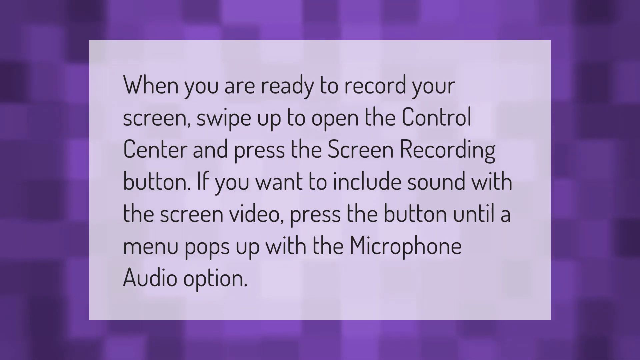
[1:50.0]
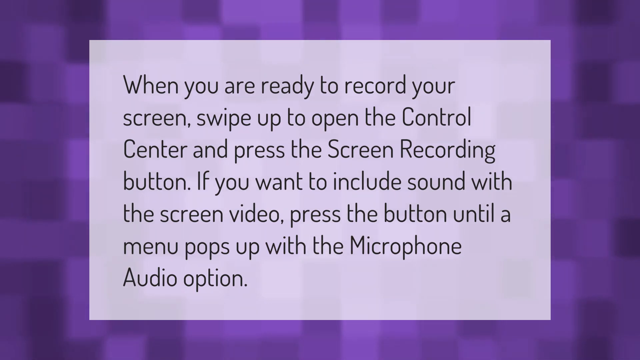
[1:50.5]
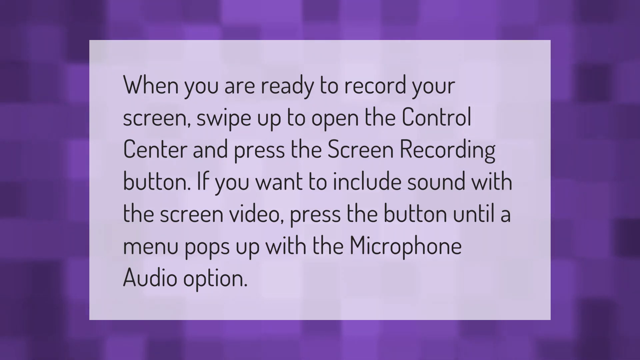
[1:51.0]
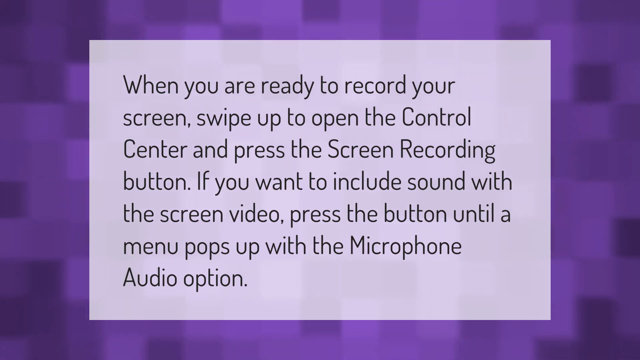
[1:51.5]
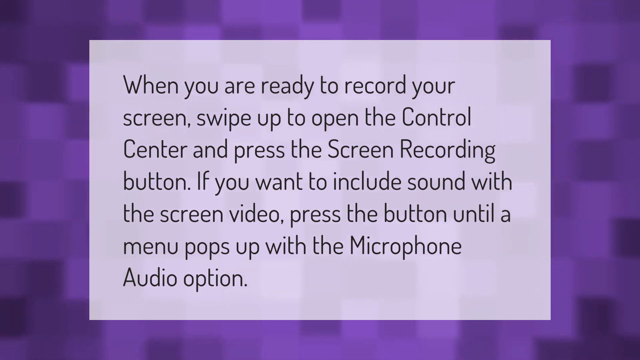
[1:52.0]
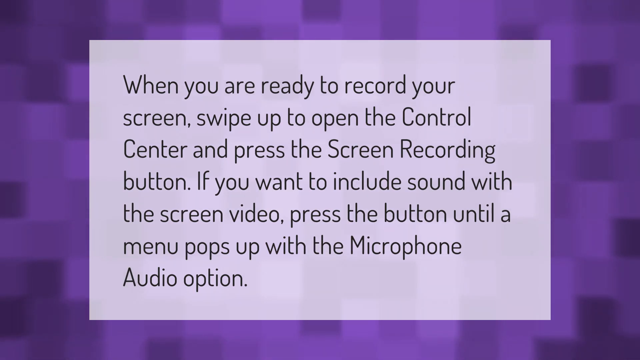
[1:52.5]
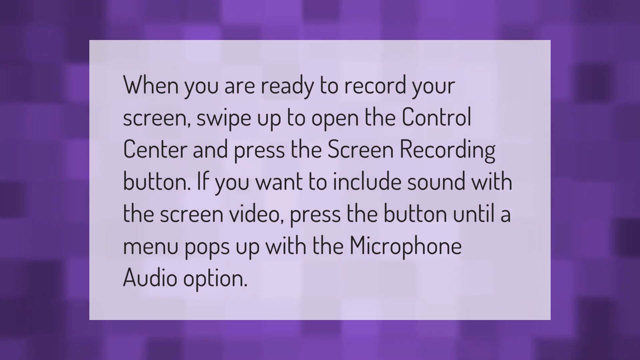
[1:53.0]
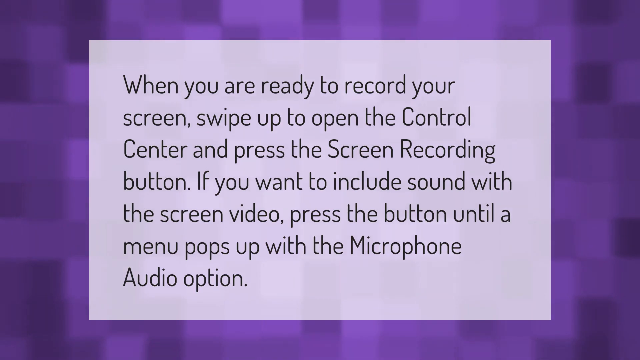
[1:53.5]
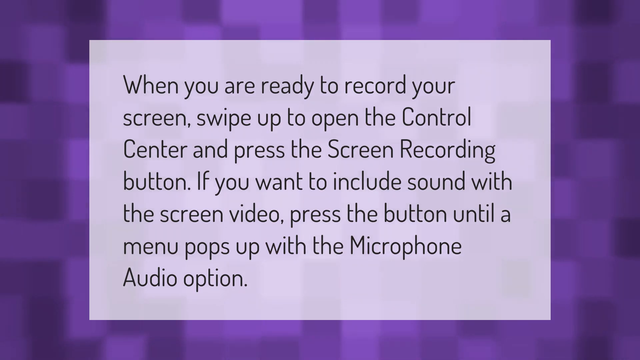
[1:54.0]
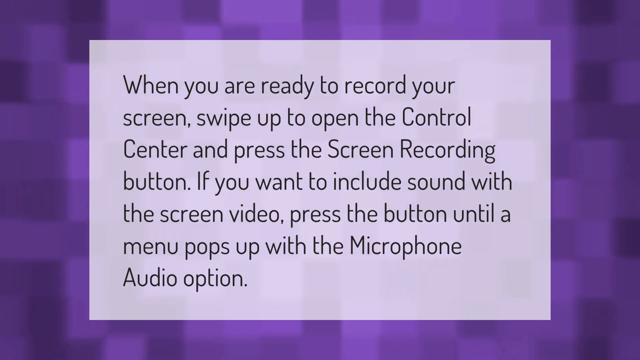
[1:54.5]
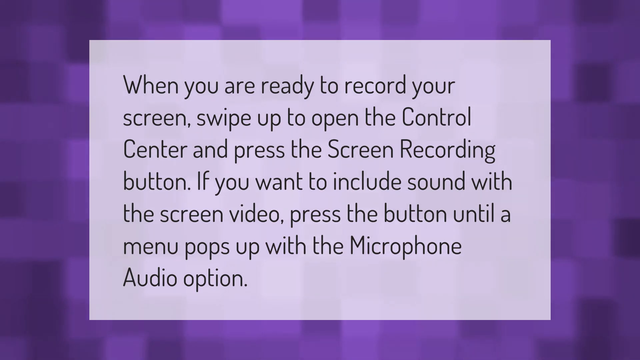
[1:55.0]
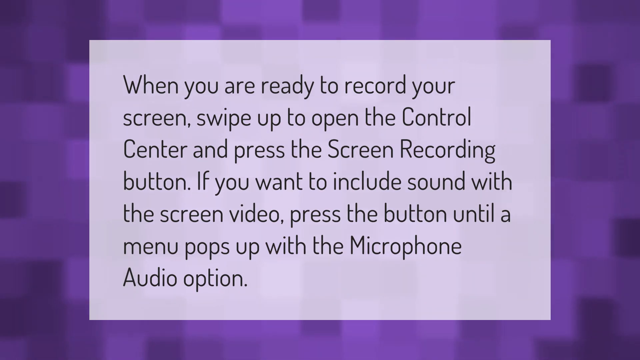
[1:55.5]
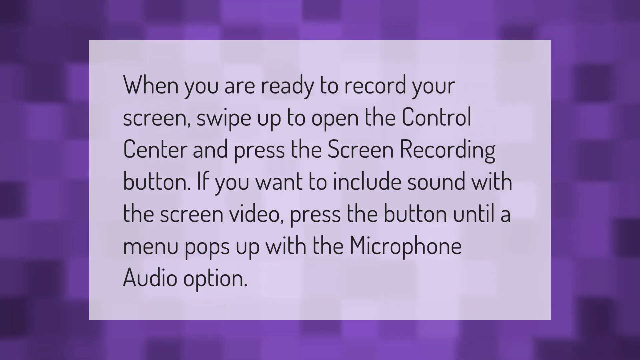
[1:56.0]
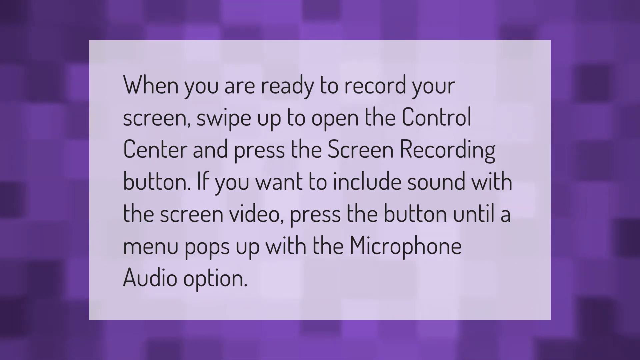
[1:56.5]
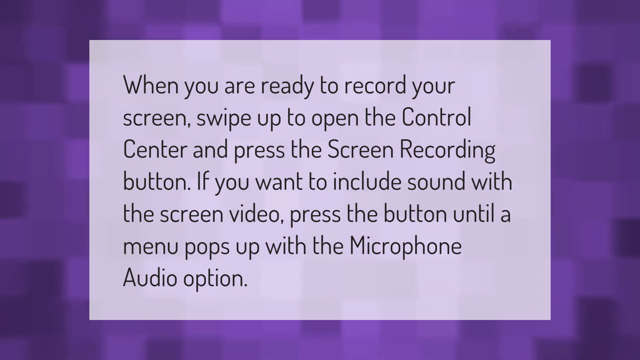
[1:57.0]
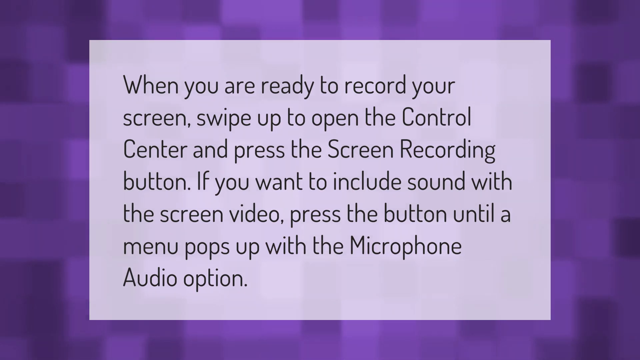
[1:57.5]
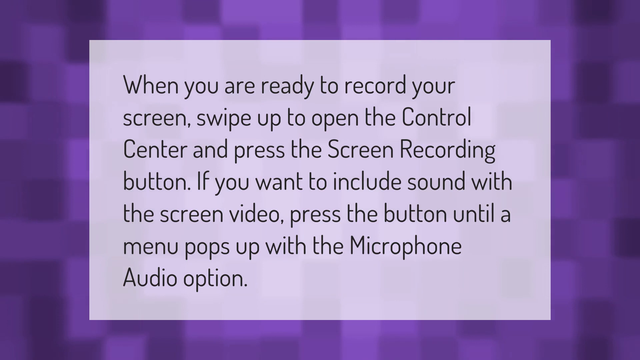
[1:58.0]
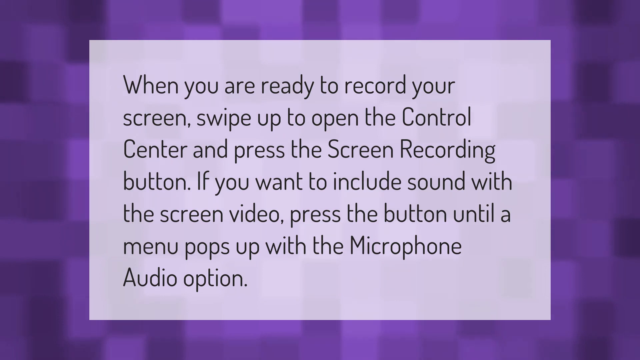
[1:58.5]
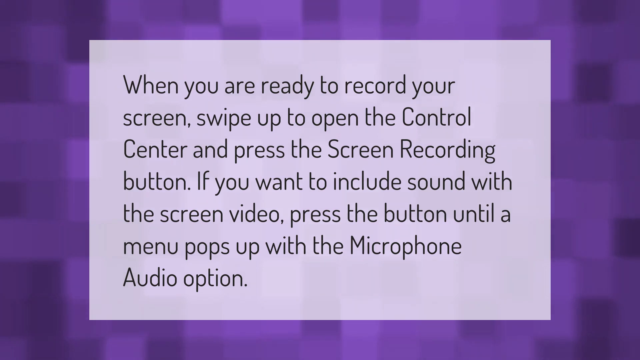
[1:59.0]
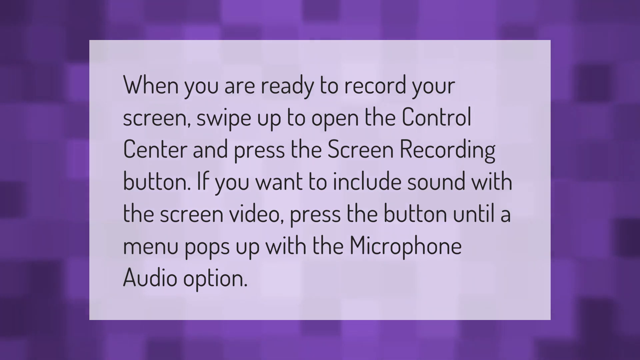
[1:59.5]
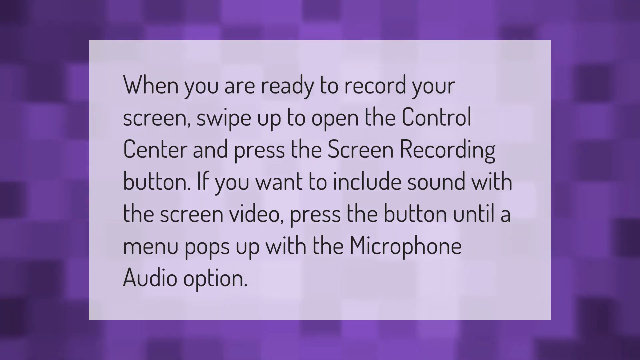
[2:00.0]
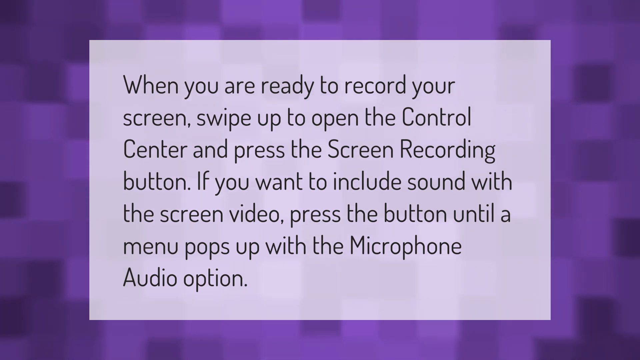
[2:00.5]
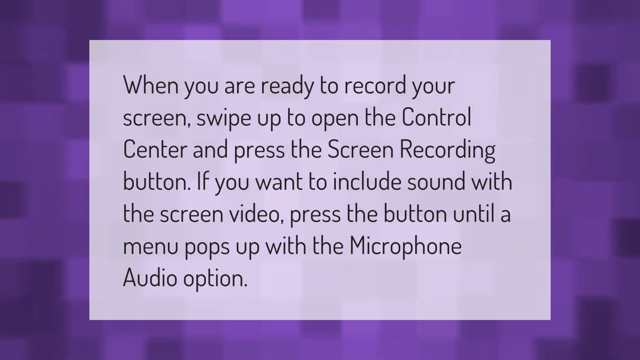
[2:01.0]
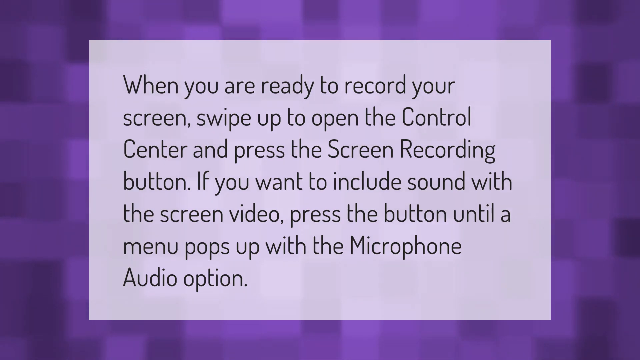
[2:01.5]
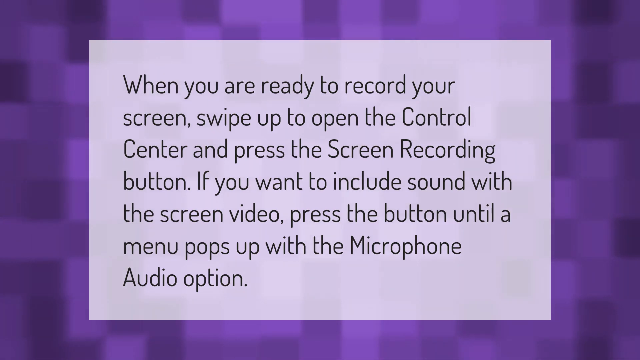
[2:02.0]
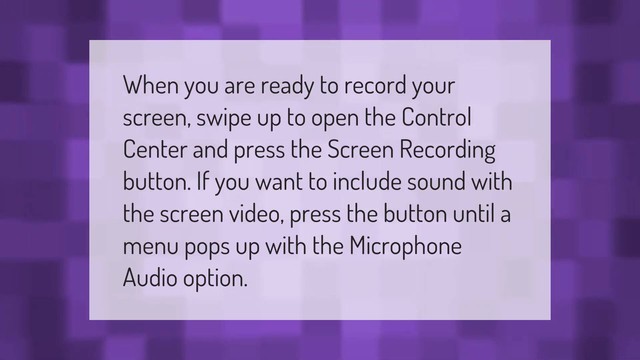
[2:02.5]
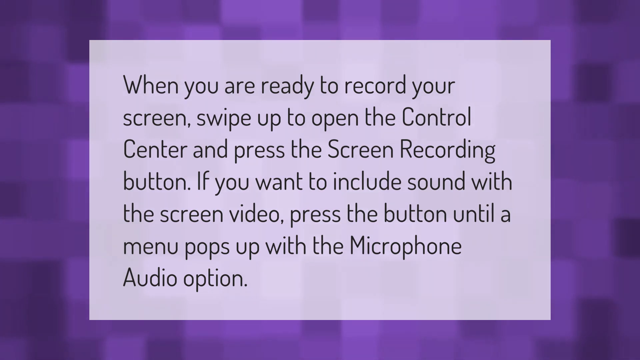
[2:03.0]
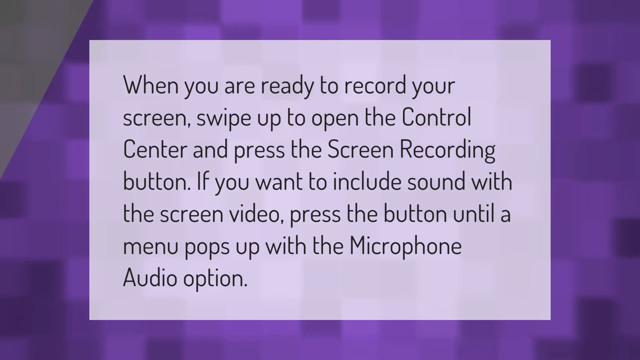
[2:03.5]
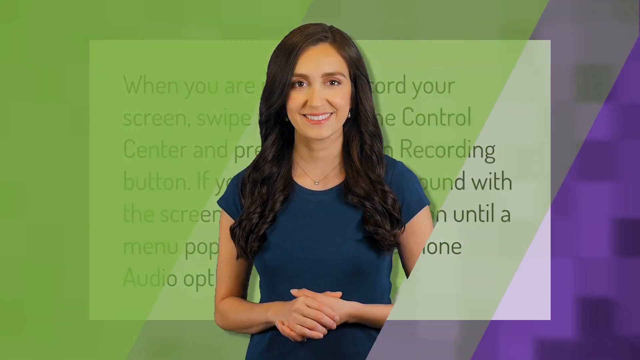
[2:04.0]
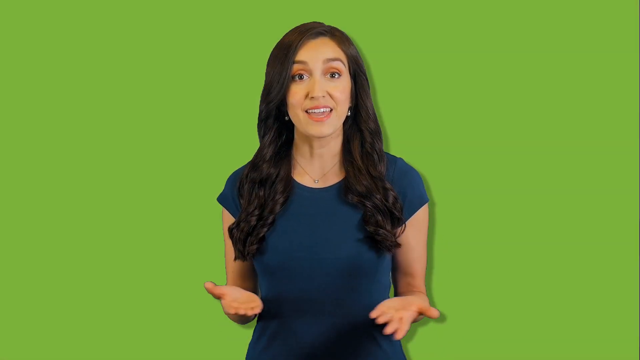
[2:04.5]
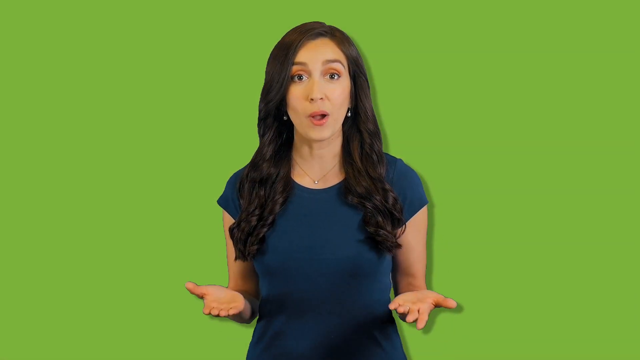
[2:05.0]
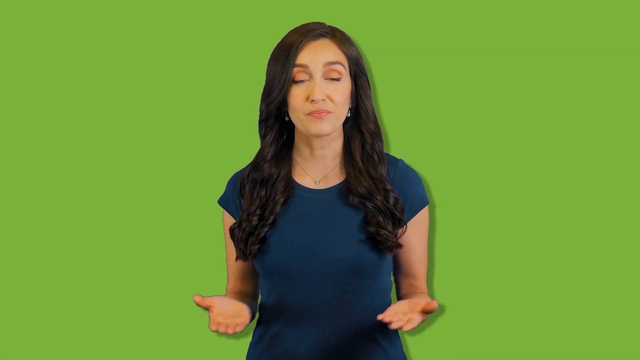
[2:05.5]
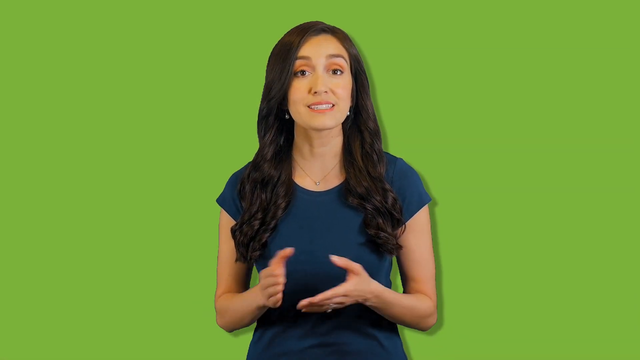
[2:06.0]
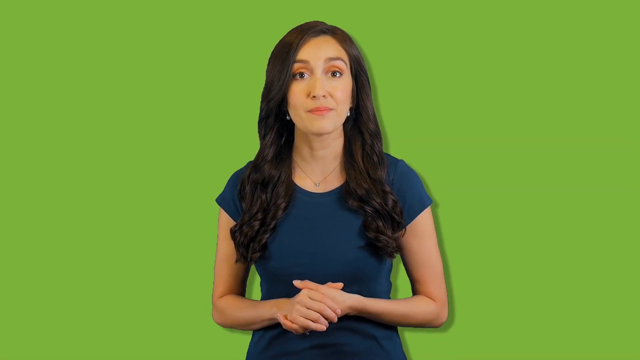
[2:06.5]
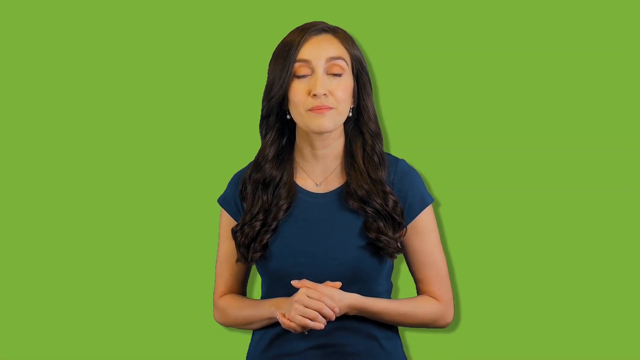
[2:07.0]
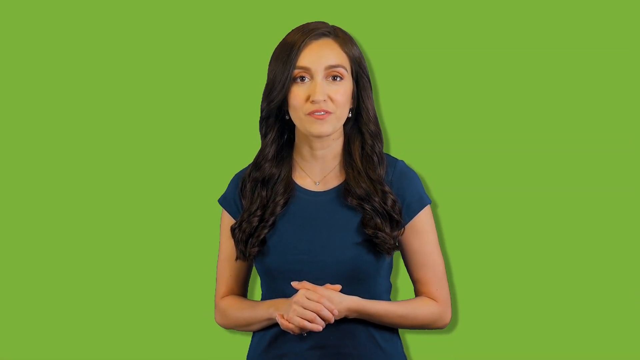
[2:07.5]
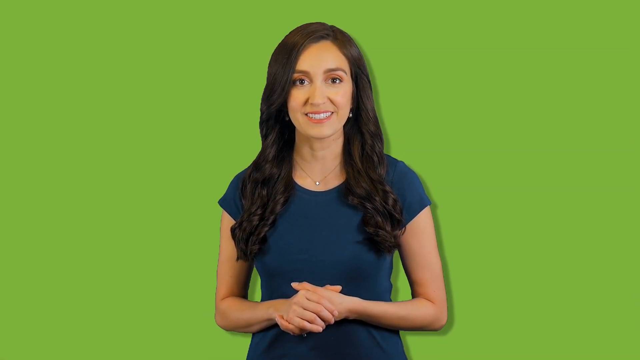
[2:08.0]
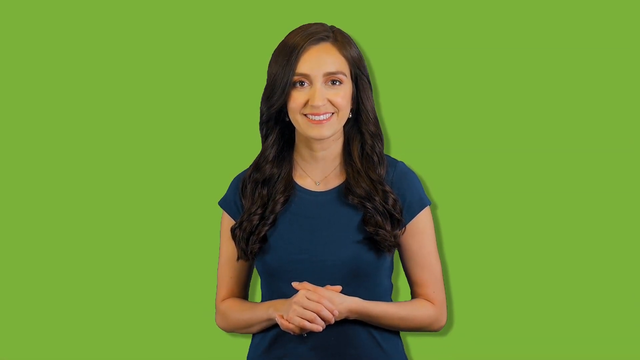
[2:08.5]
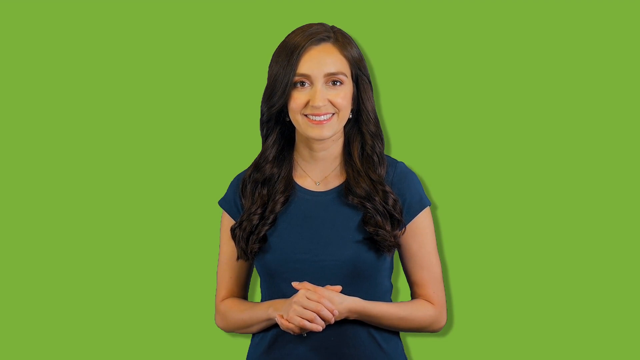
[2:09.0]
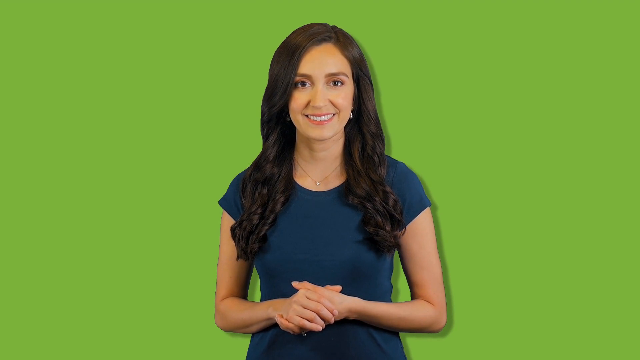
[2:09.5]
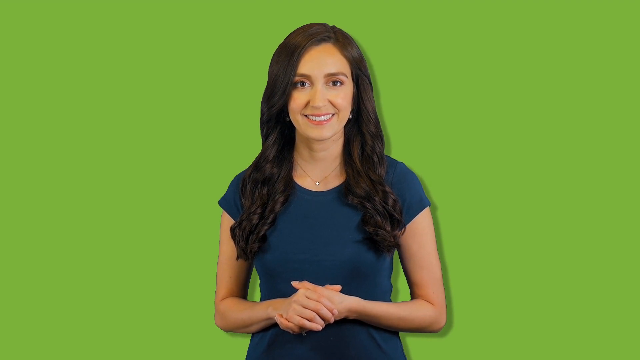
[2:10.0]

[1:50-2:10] A lavender background patterned with small squares mixes light, a bit darker and the darkest shades. In front is a square taking up almost the entire screen; it is light colored and looks like a shade of lavender as well. Black text within it reads "when you are ready to record your screen, swipe up to open the control center and press the screen recording button. If you want to include sound with the screen video, press the button until a menu pops up with the microphone audio option." The video transitions to a green background with a woman in the middle. She has long brown hair that comes to her chest and wears eye shadow, light makeup, earrings, a gold necklace and a teal or blue short-sleeved pullover shirt. She speaks, using hand gestures and eye movements to emphasize her points.